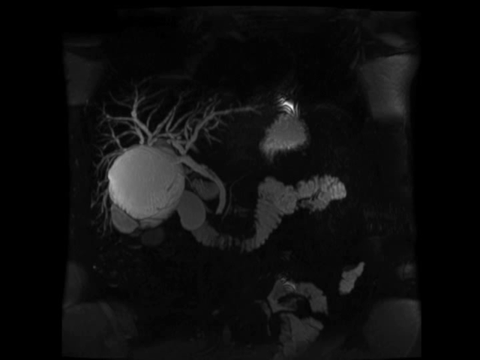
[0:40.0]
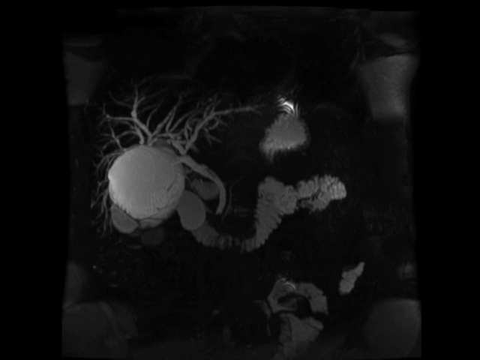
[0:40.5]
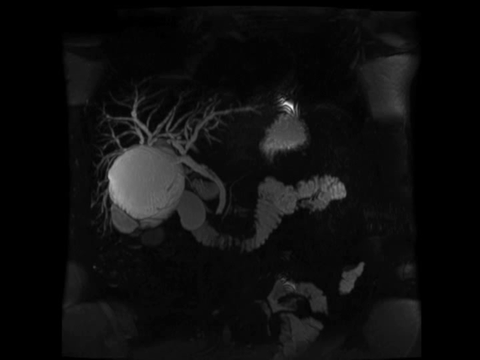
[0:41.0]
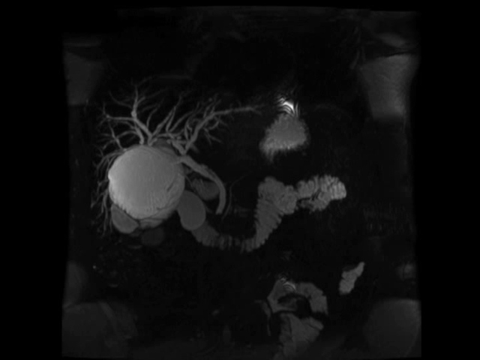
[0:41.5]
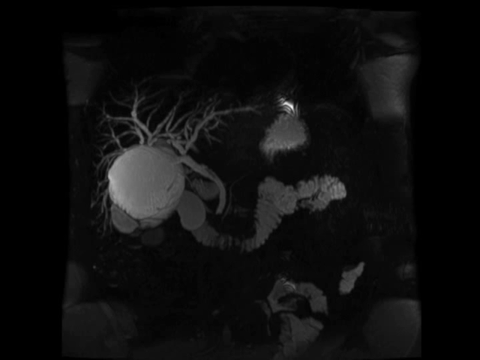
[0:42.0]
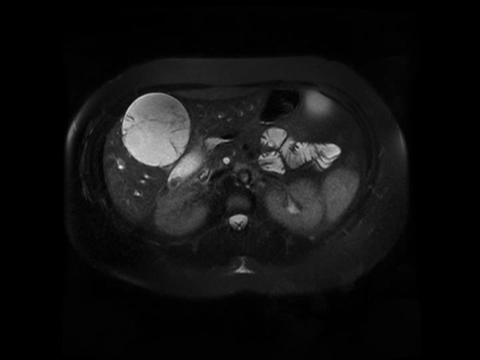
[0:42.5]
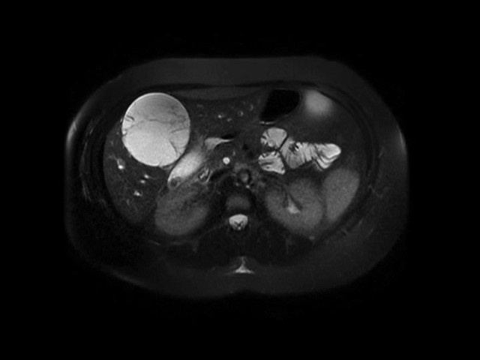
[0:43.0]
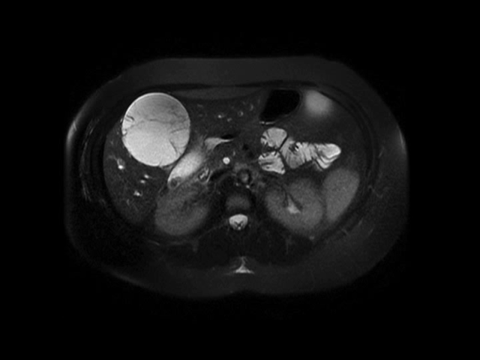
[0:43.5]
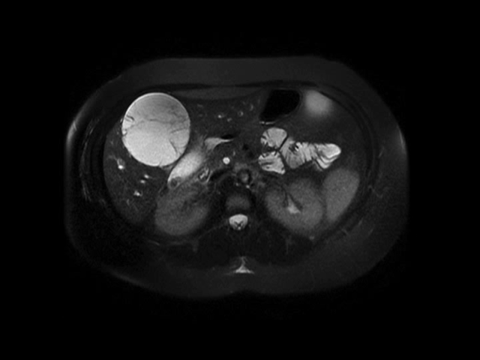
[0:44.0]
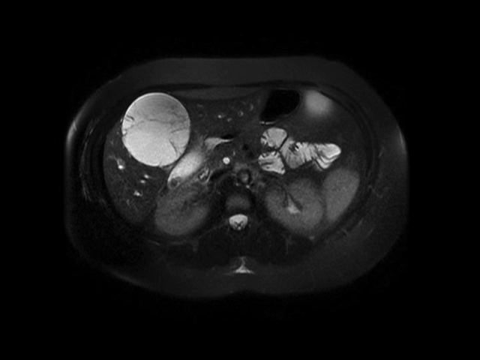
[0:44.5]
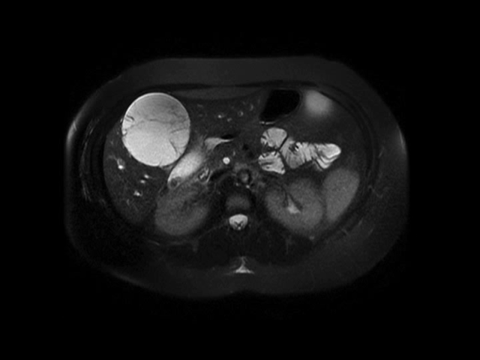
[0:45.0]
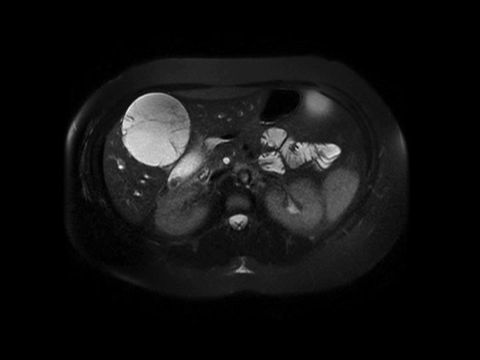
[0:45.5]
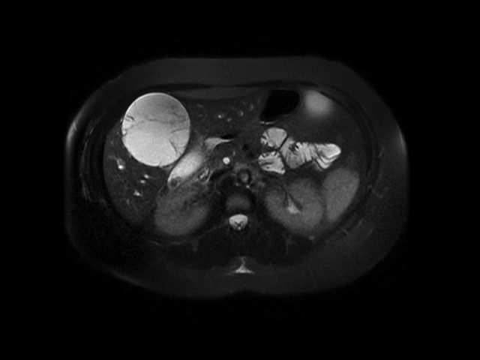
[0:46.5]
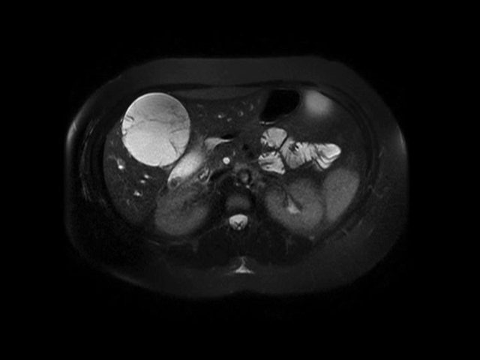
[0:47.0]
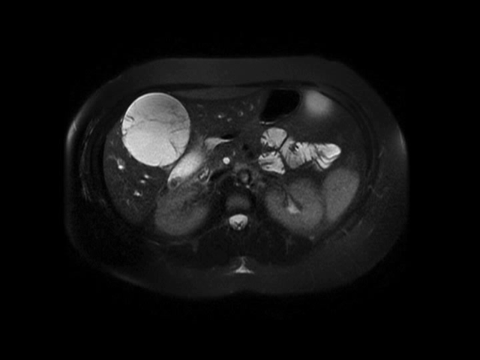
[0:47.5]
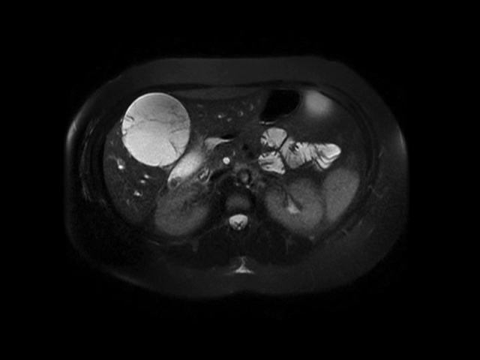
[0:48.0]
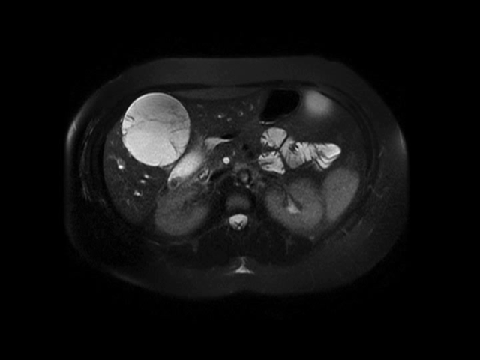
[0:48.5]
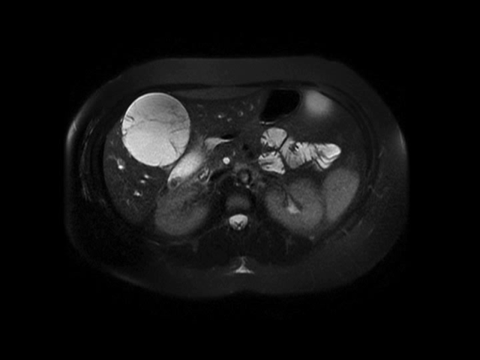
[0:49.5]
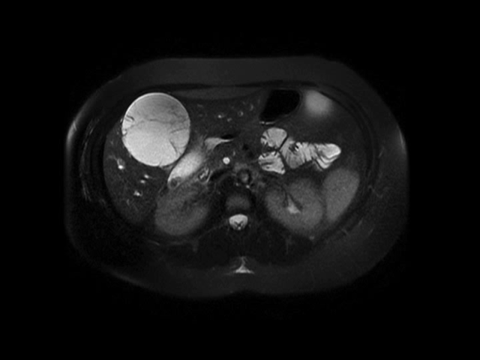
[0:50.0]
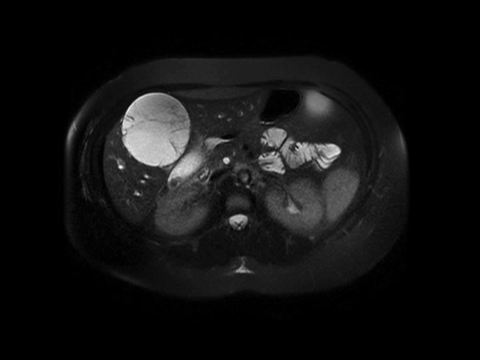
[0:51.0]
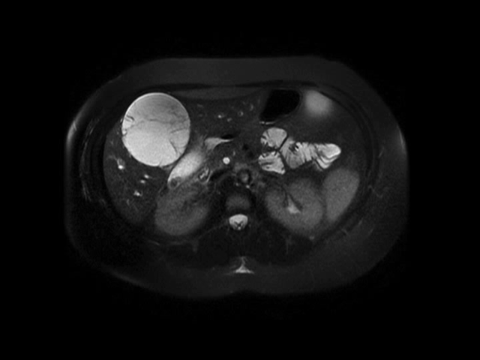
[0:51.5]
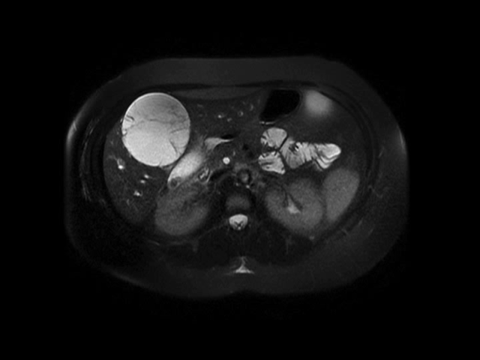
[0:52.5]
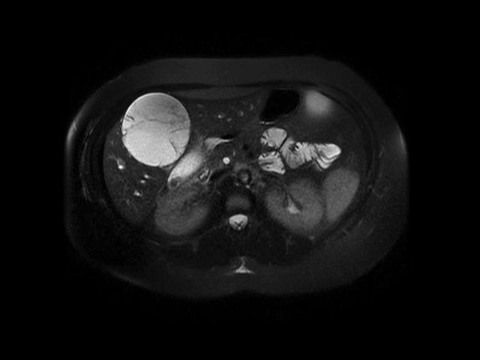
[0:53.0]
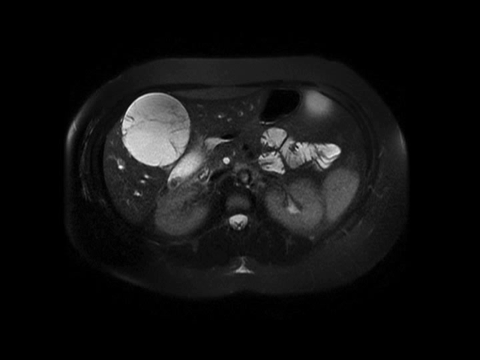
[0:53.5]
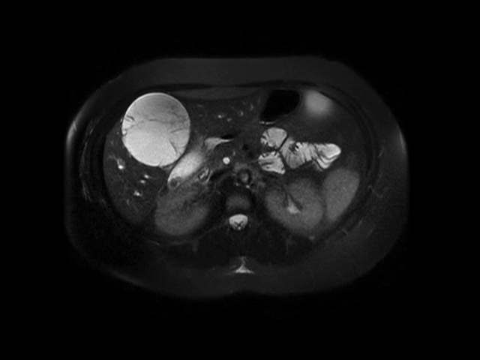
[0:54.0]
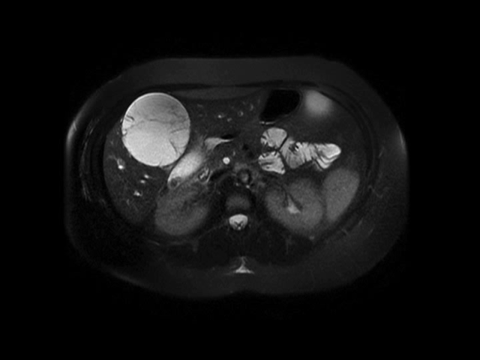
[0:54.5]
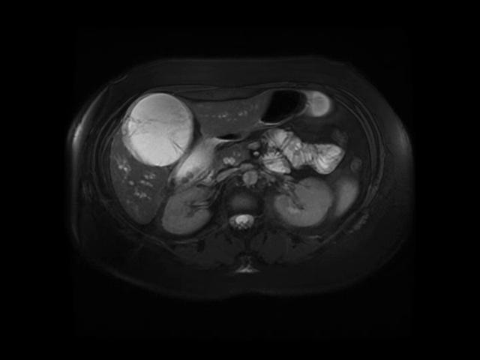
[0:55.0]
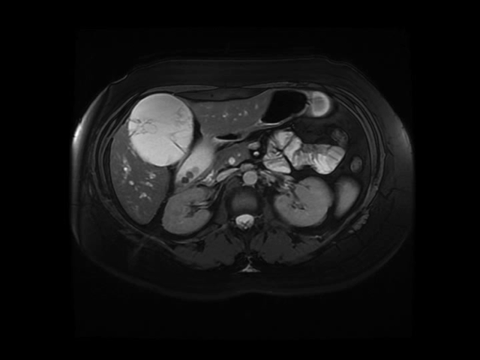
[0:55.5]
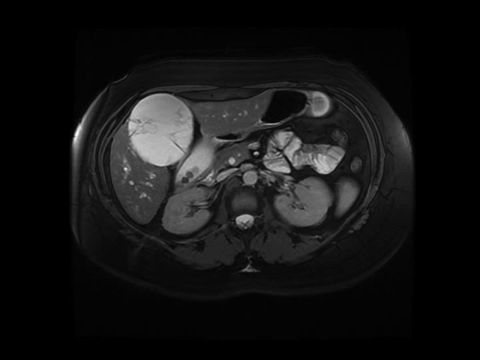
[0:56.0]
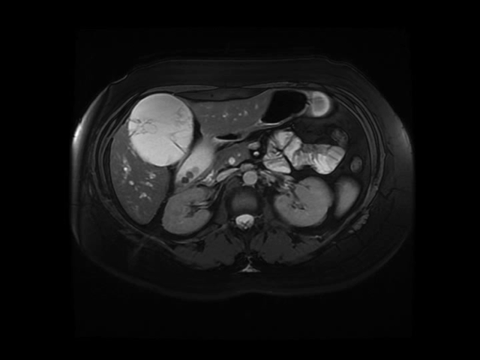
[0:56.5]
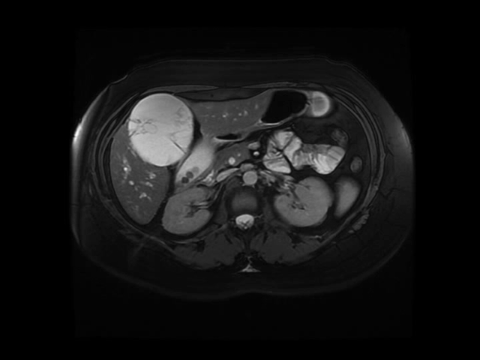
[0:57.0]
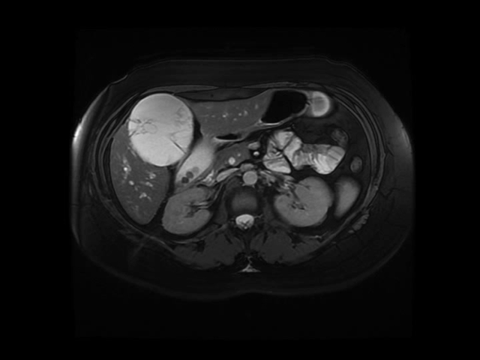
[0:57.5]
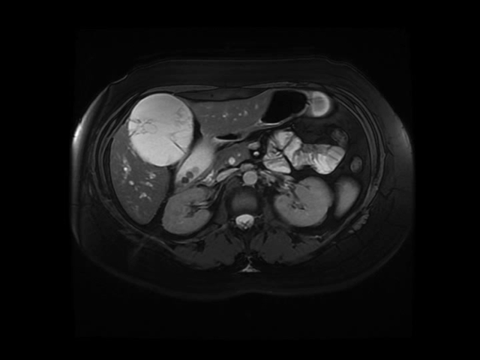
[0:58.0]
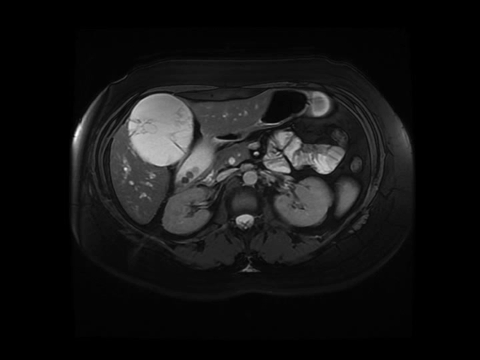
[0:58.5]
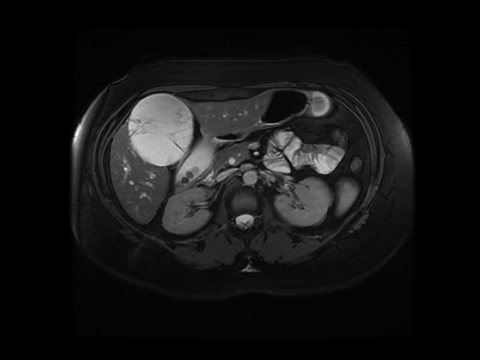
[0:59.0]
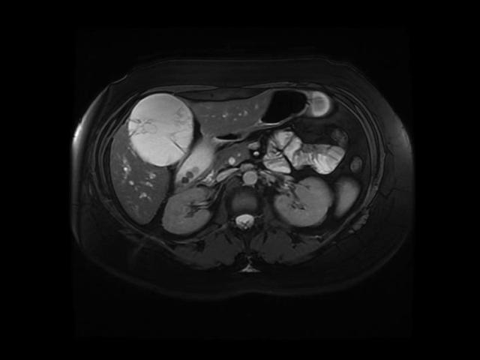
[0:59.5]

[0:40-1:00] The image changes completely and no longer shows the possible human trunk from above; it is apparently a side view of something unidentified. Faintly towards each side of the image are lighter gray patches that look like columns. In the middle is something resembling a growth of some kind: a whitish gray irregular ball with whitish gray structures that look like trees growing on top of it and roots growing from it, possibly veins and arteries. Many go up from it and are thicker, larger and more pronounced, while smaller ones go down the left side; none protrude from the bottom. The thickest one extends to the right side into the darkness. Two small, poorly shaped bean-like shapes are on the left and right of the ball, and another irregular gray line that looks like smoke goes towards the right of the image.